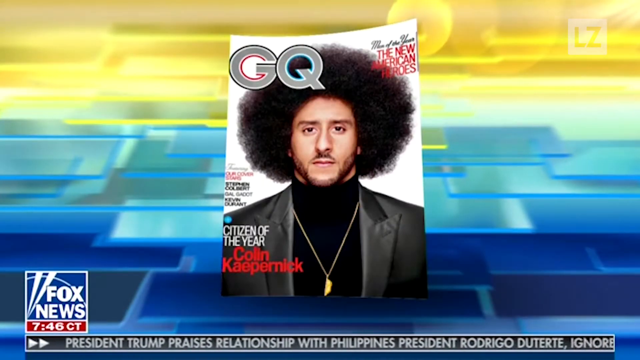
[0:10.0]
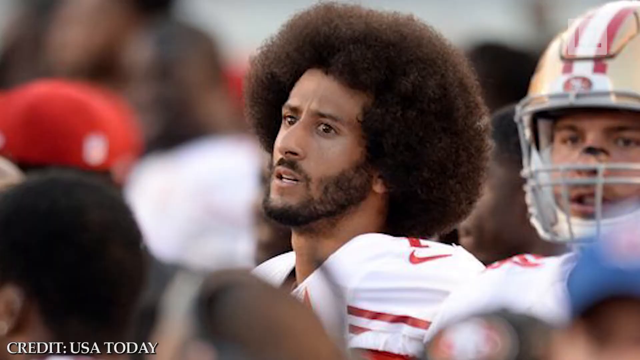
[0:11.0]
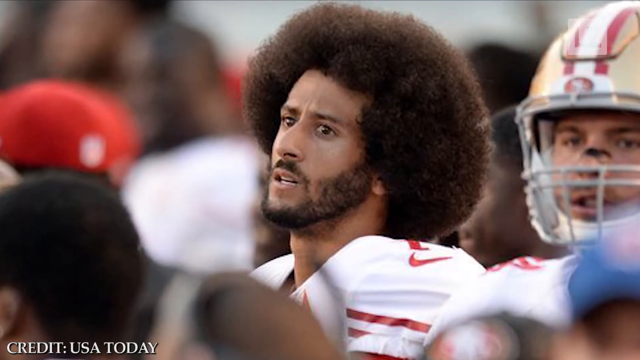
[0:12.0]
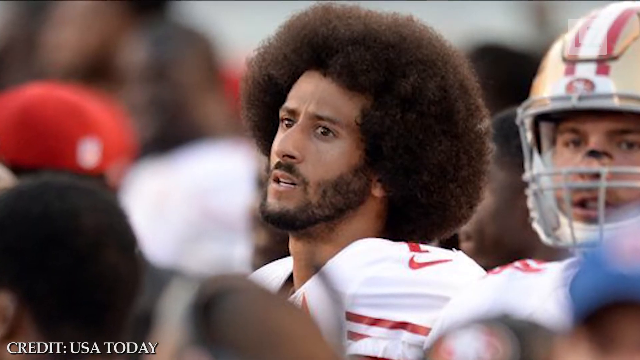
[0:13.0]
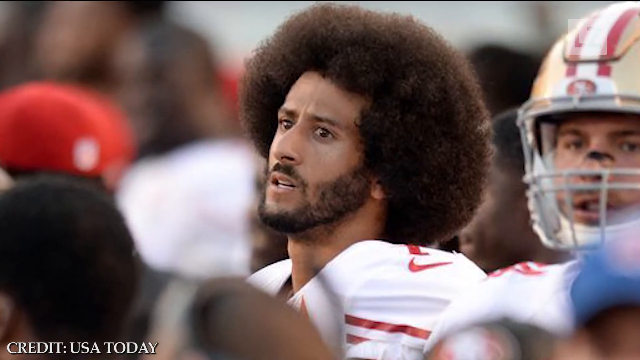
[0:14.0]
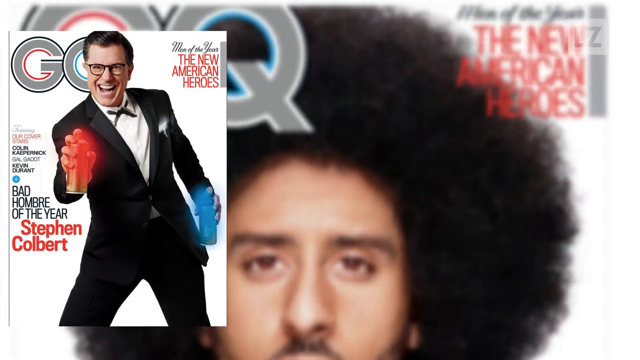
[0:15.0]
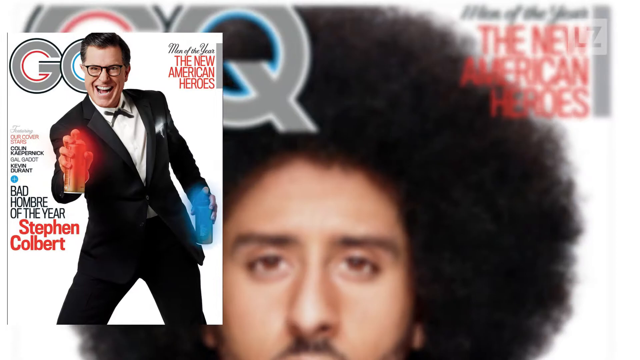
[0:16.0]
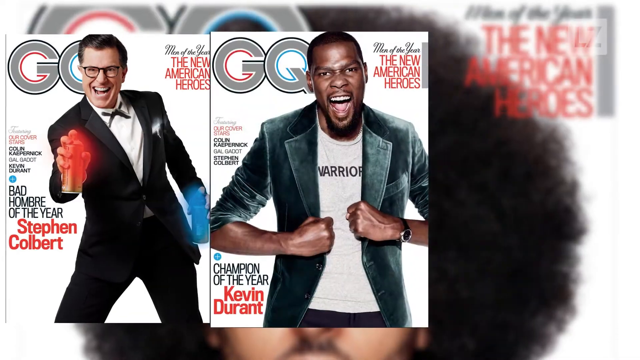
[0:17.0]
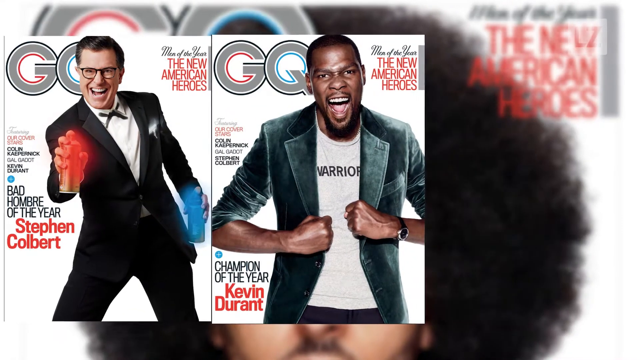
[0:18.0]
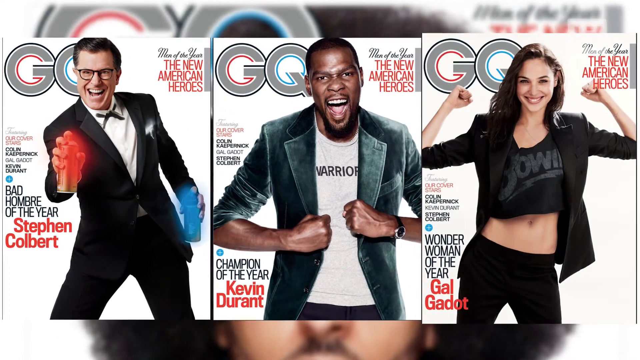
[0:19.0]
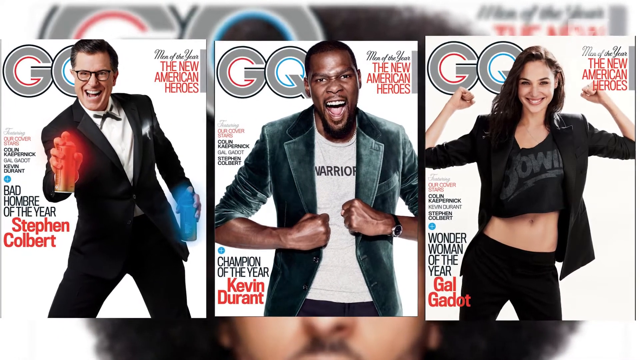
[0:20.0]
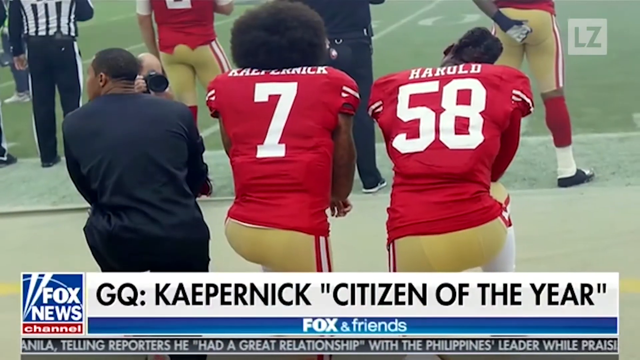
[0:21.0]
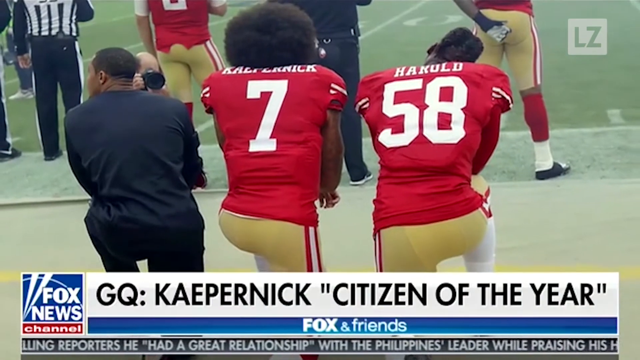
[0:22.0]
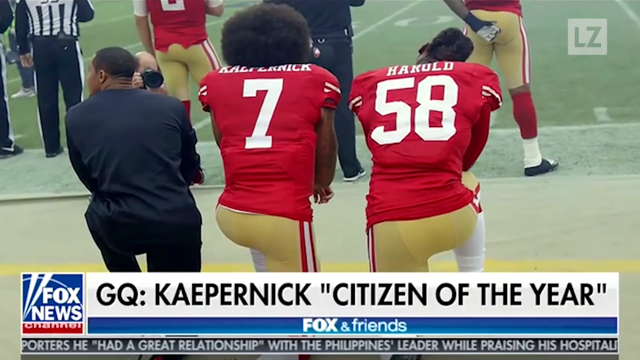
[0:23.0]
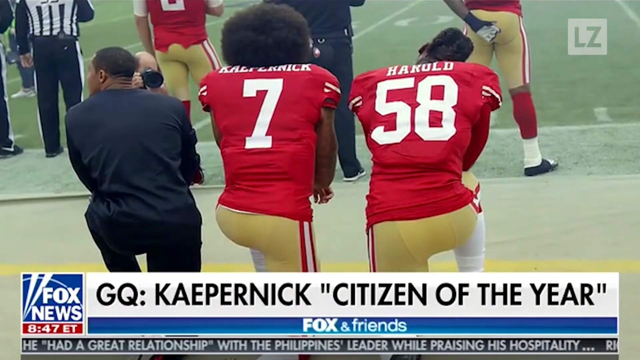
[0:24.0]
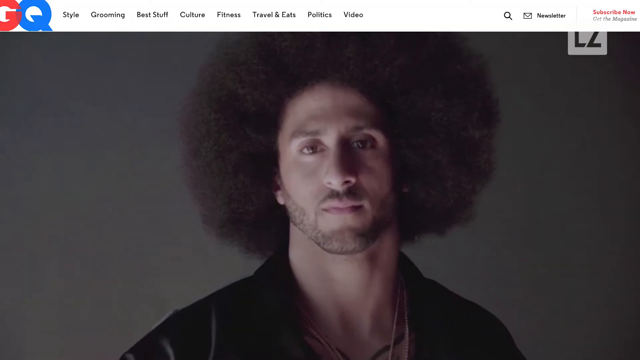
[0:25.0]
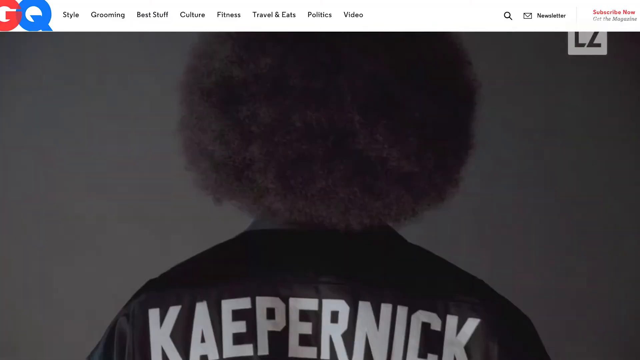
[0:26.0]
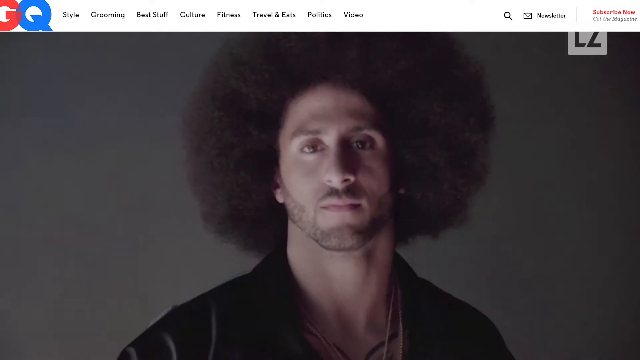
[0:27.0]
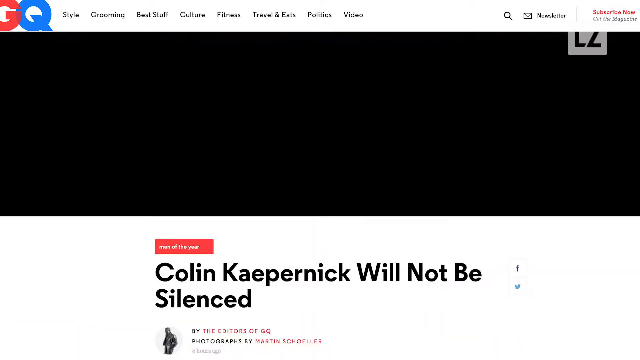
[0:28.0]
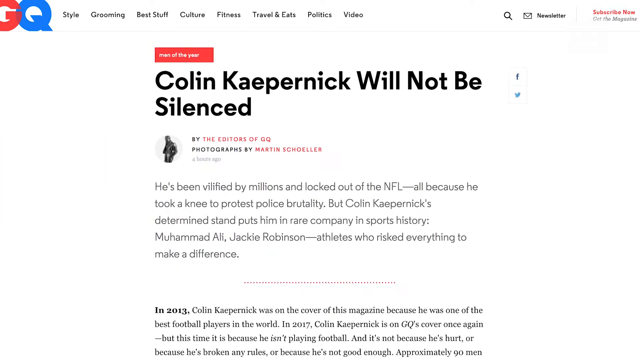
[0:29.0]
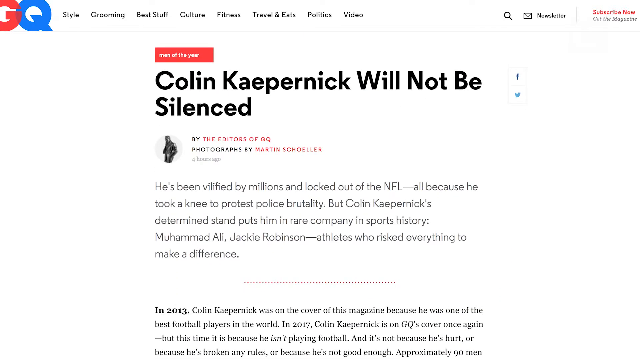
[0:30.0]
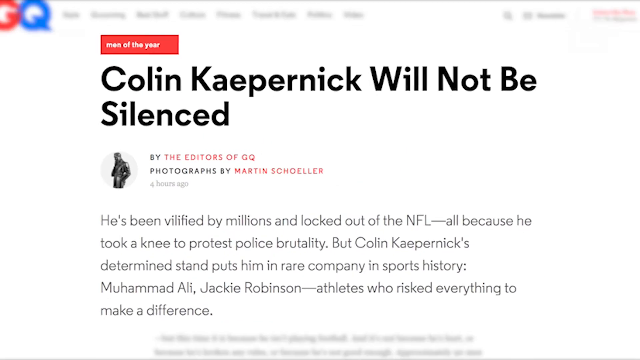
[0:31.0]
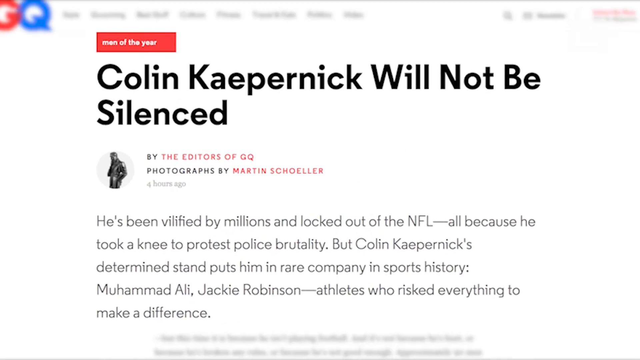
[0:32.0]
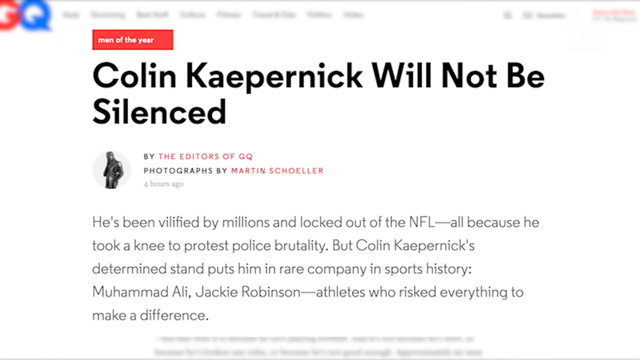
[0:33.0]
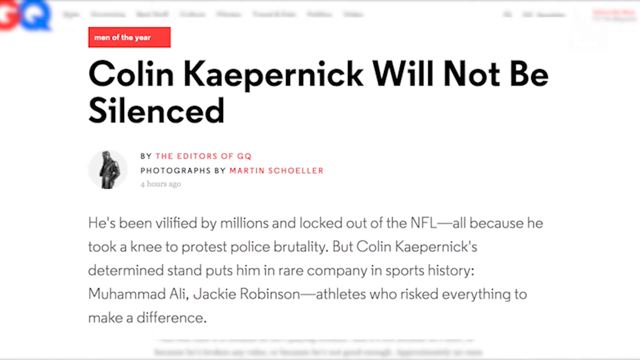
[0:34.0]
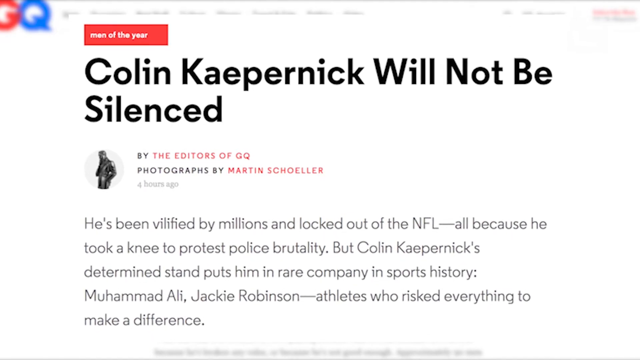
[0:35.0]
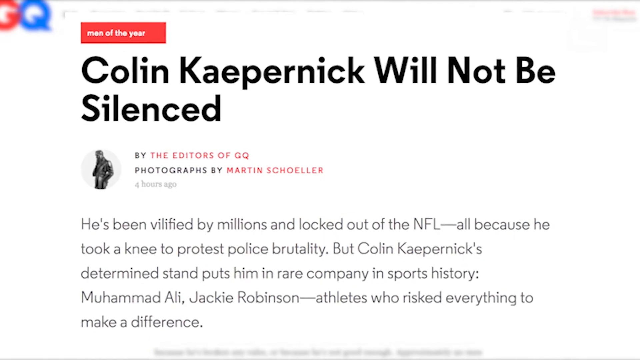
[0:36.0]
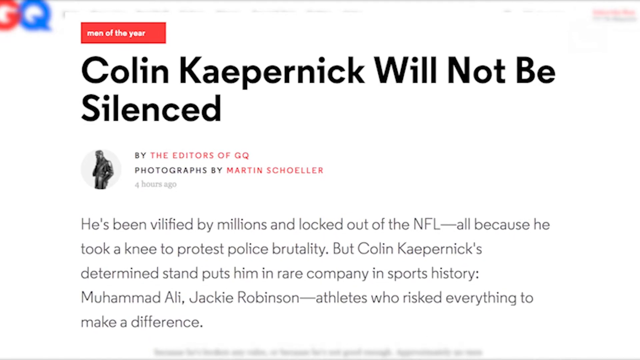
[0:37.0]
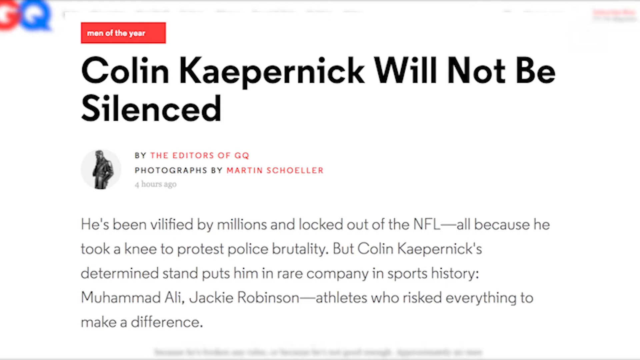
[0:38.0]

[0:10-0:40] A blue and dusty yellow magazine snippet is in front of the camera. The man on it has an Afro, and the page reads "GQ". The video then shows him on a rugby pitch, with Afro hair and a beard, wearing a white mesh uniform. A credit reads "Credit USA Today". Three more magazines pop up on the screen: the first shows a white man in a black suit; the second shows a black man in a navy blue jacket with a watch on his wrist, to the left side; and the third, just popping up, shows a woman with her hands in the air and clenched fists. He wears a black jacket and black trousers. The video then goes straight to the pitch, where rugby players wear red vests and yellow trousers, and beneath it is written "GQ Kaepernick Citizen of the Year". The pitch is green. Kaepernick's face pops up again as he faces the camera with his Afro hair.